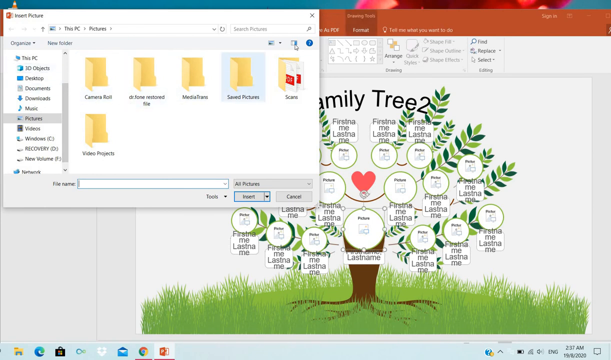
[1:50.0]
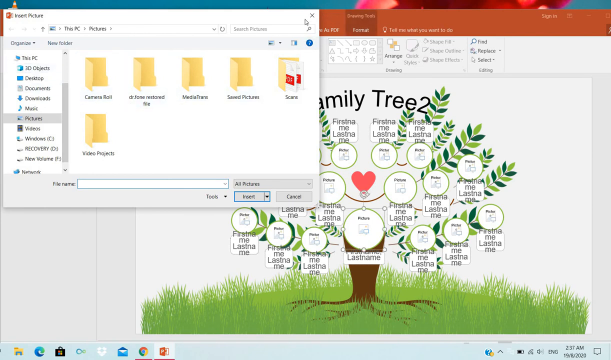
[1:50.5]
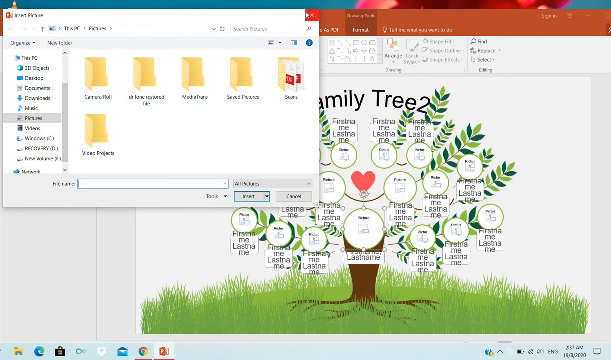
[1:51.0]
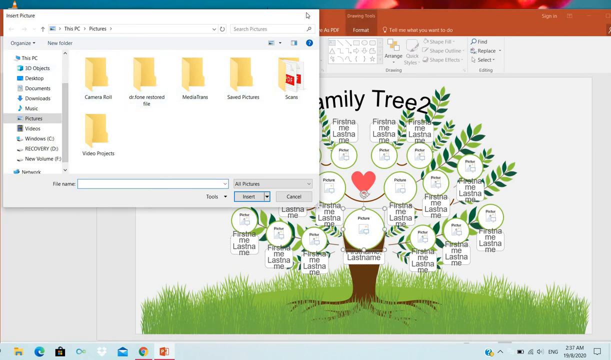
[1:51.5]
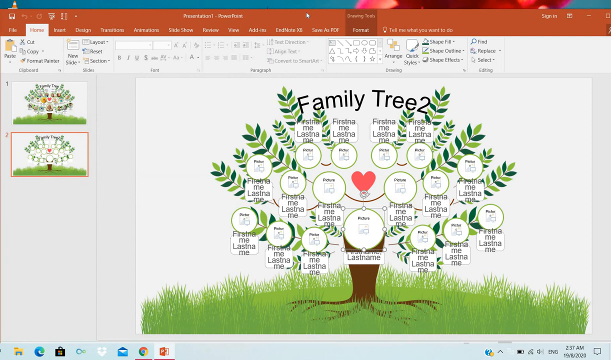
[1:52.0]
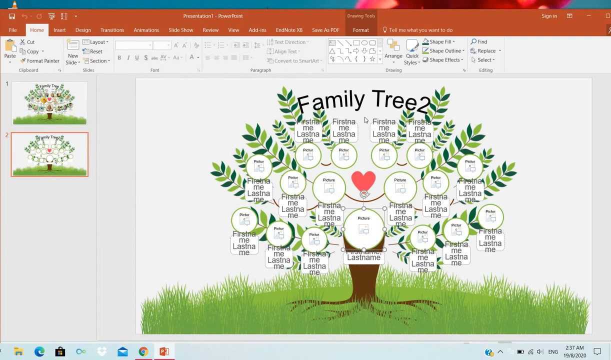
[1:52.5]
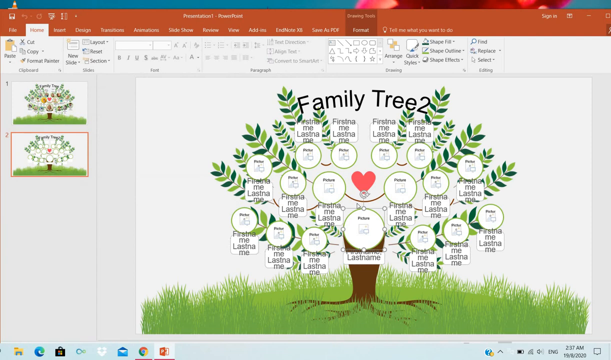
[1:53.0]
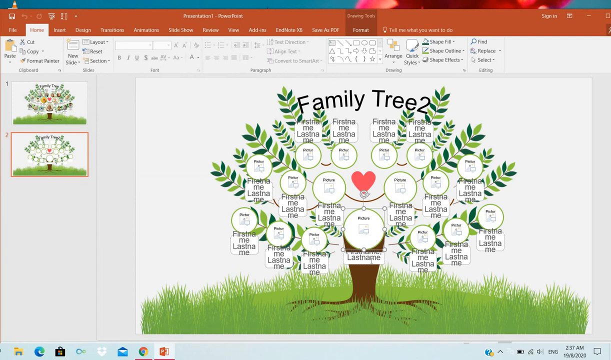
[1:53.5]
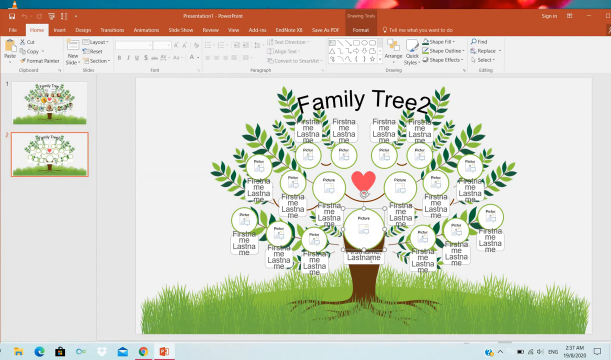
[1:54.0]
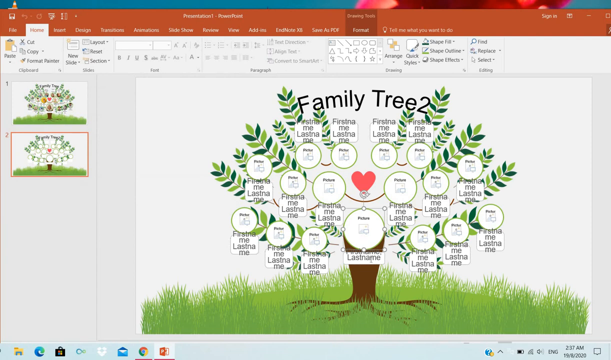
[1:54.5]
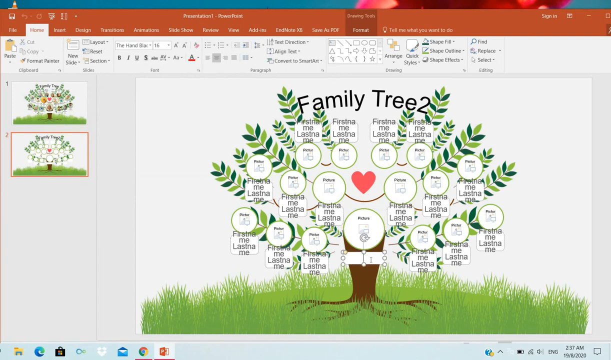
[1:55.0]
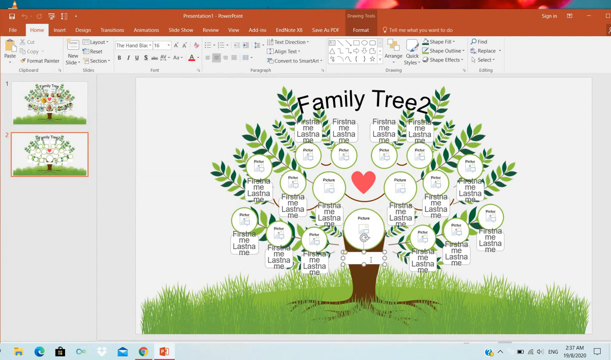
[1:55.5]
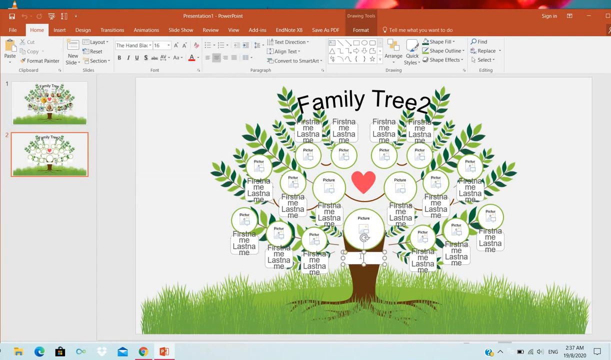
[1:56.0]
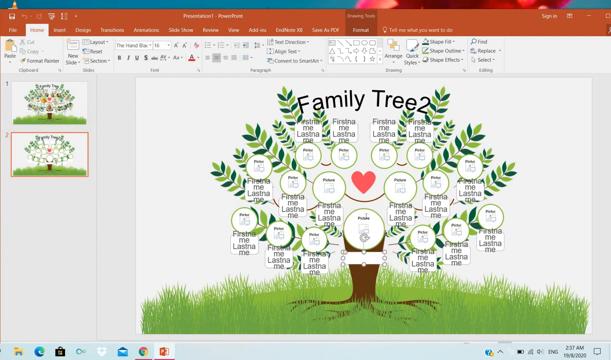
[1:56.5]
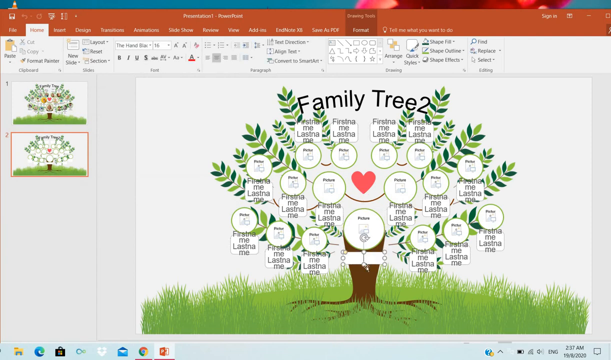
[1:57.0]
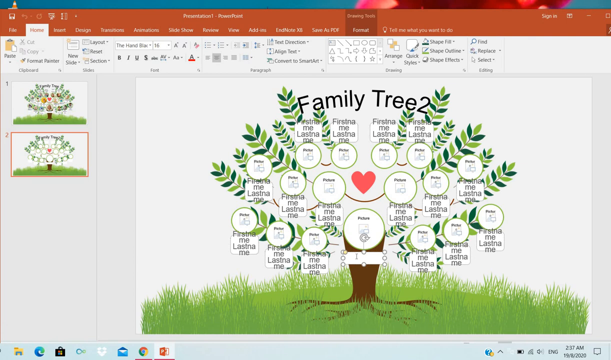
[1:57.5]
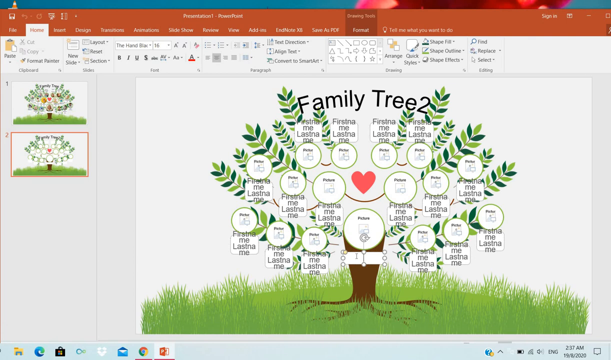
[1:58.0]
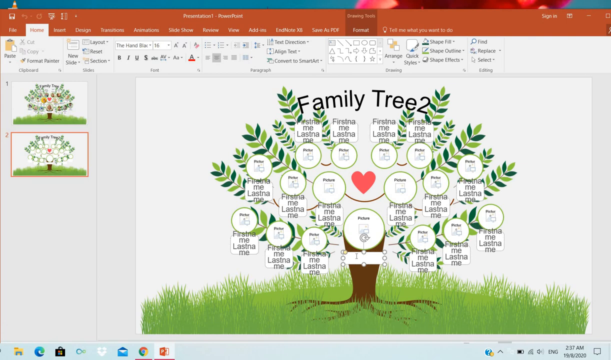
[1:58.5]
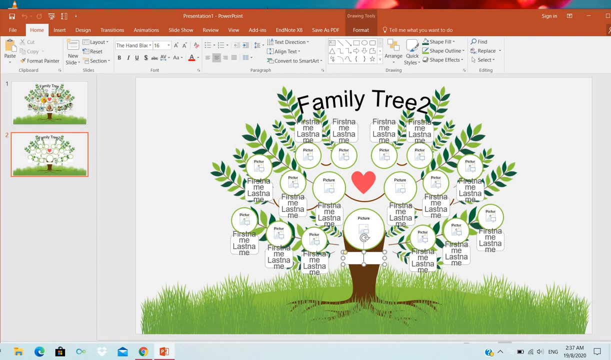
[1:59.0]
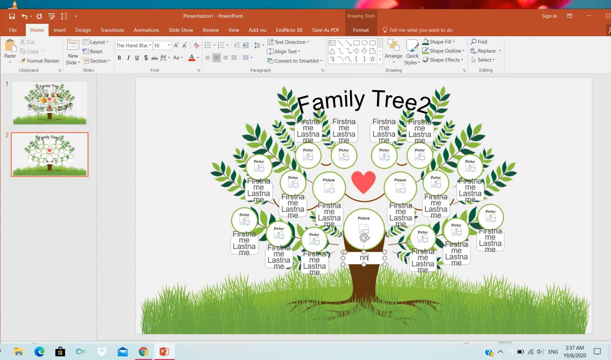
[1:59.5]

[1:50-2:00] The person is working on "Family Tree 2", which seems to have names added but no pictures yet. The person selects Save, and a folder and file selection window pops up at the top left of the screen, asking where to save the PowerPoint. The window is then closed again, so it is unclear whether the file was saved. There is a folder that says "save pictures", and the picture folder looks empty; the person was possibly looking for pictures of people to add to the family tree.